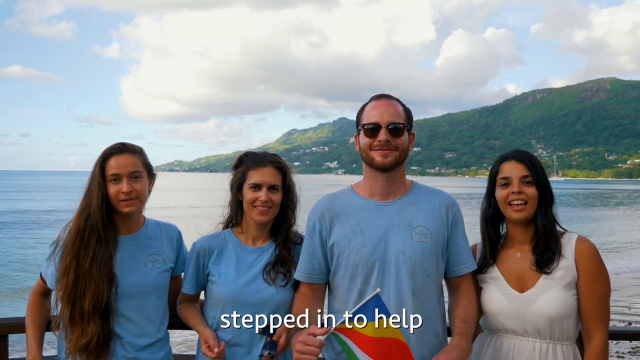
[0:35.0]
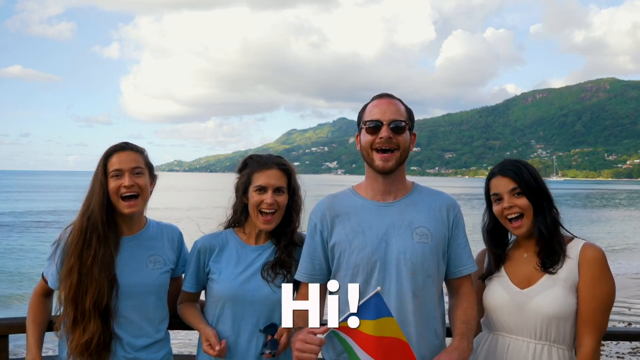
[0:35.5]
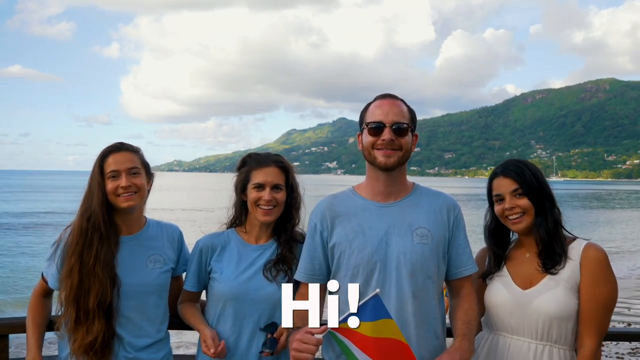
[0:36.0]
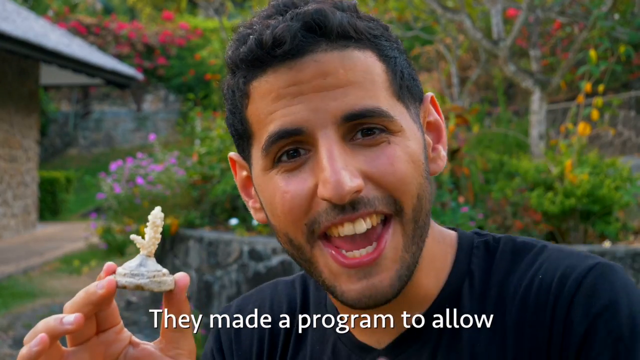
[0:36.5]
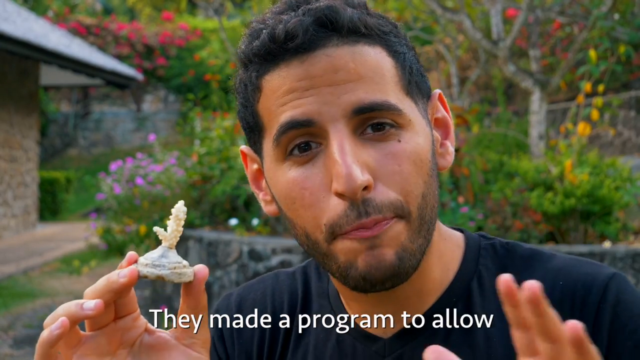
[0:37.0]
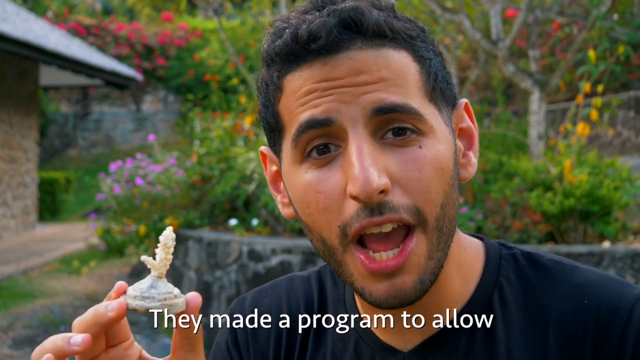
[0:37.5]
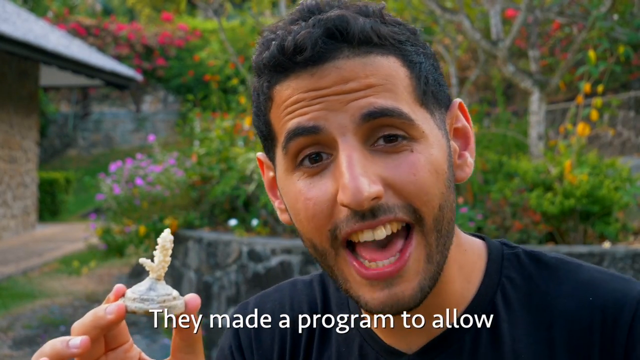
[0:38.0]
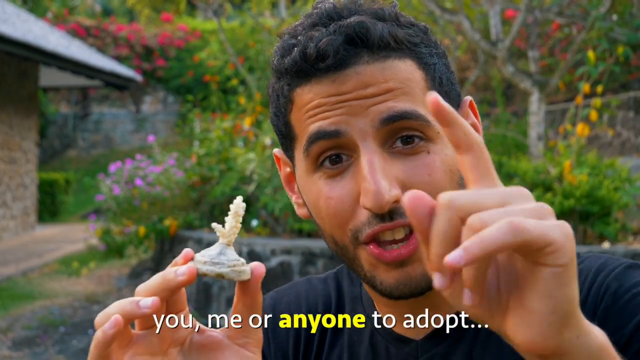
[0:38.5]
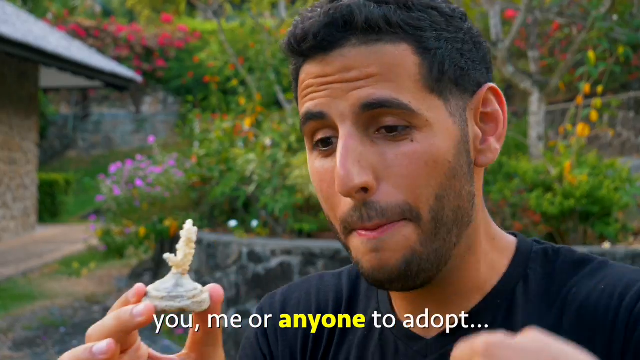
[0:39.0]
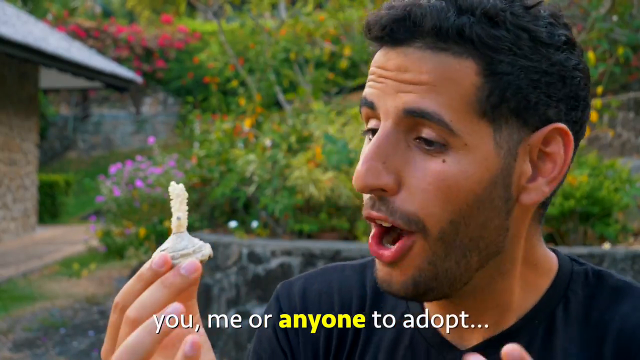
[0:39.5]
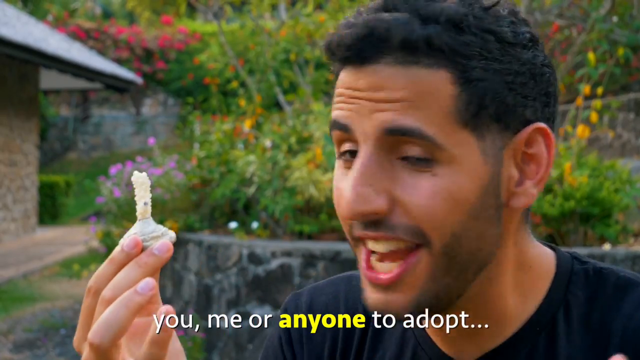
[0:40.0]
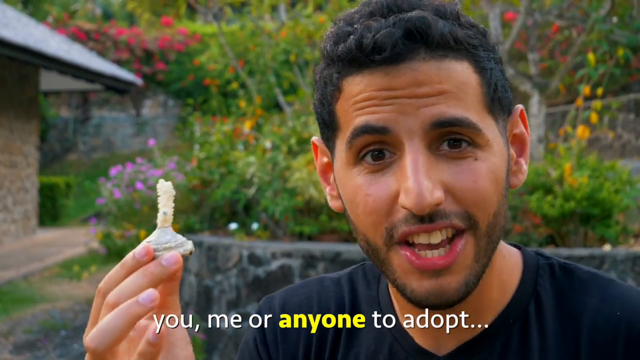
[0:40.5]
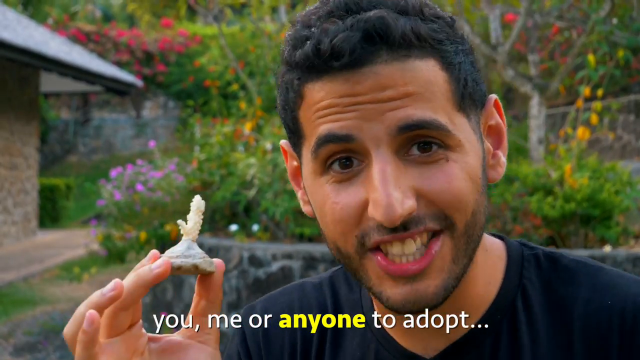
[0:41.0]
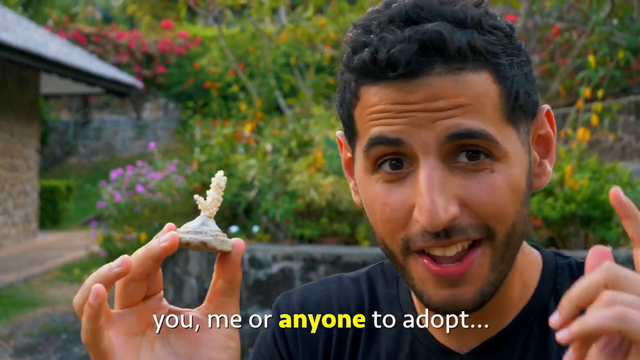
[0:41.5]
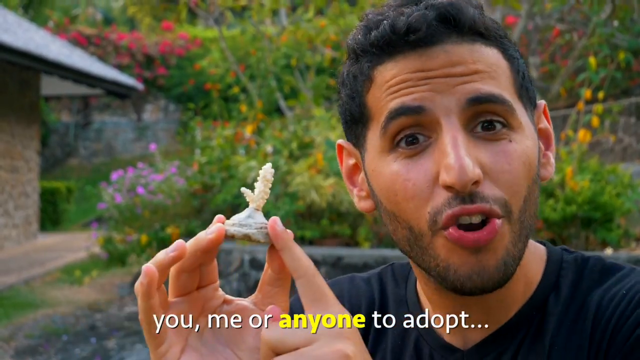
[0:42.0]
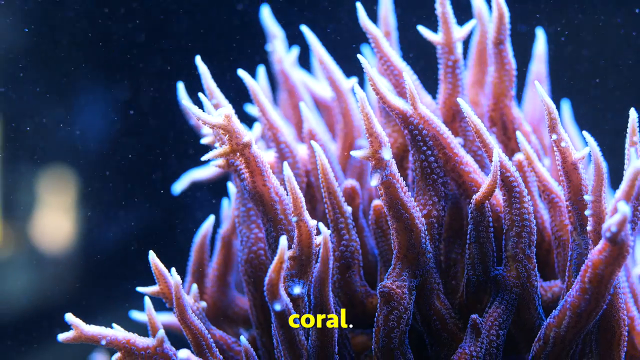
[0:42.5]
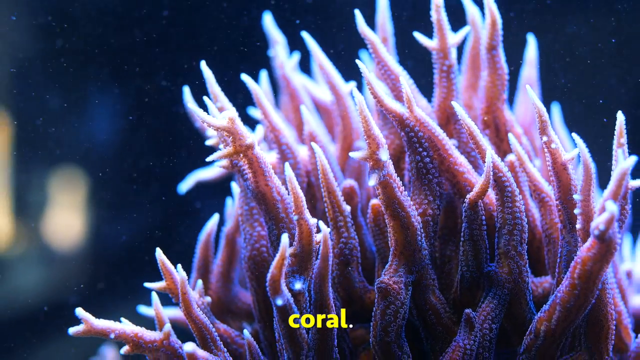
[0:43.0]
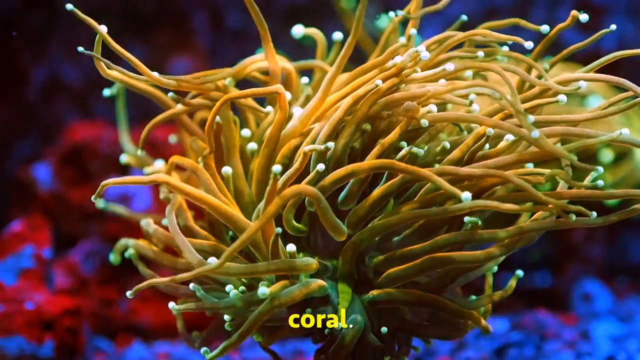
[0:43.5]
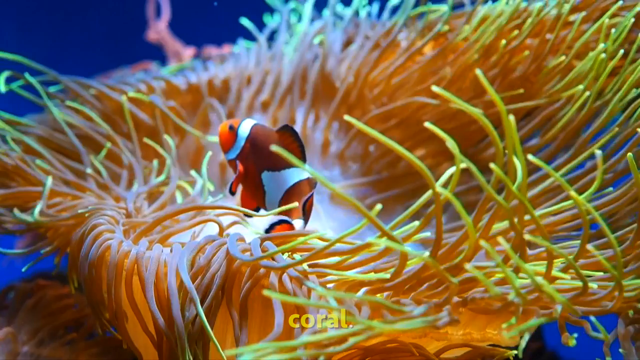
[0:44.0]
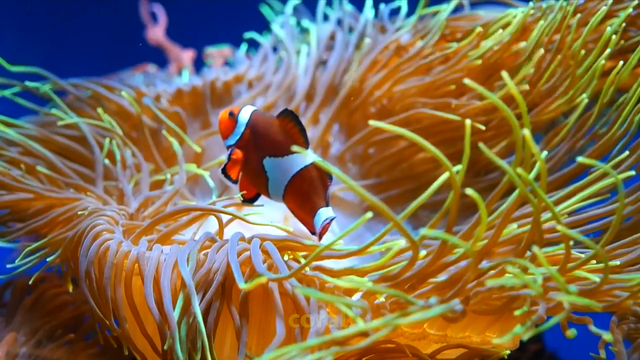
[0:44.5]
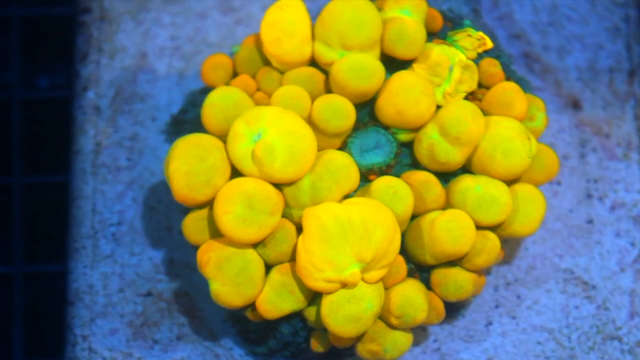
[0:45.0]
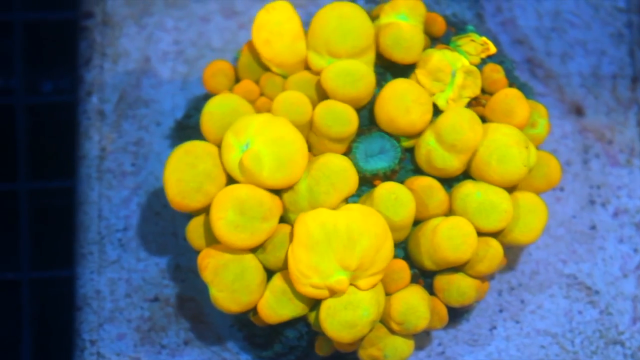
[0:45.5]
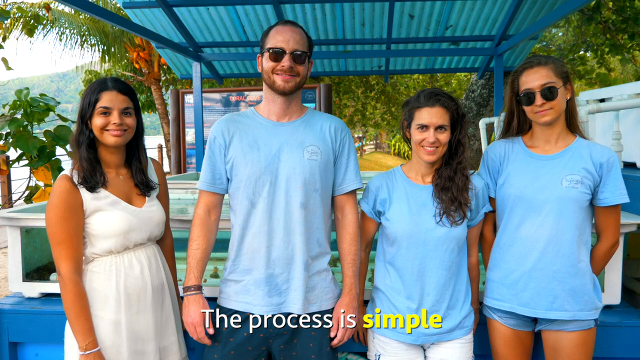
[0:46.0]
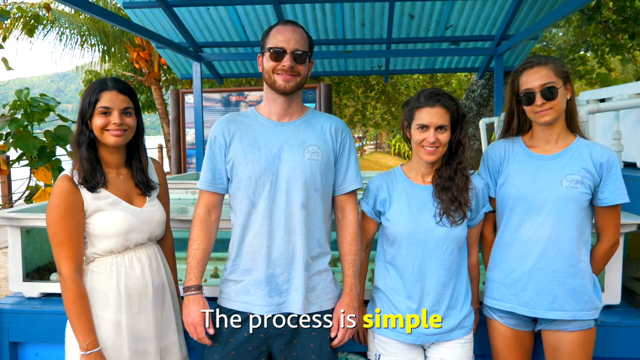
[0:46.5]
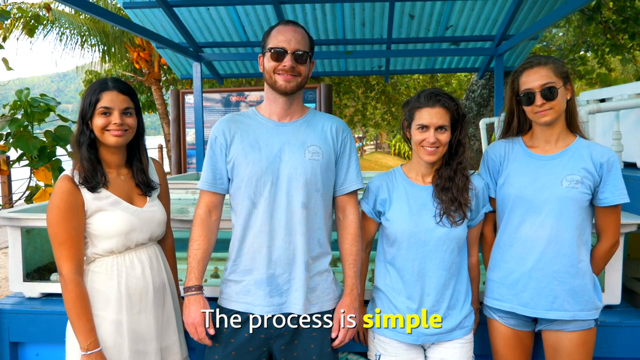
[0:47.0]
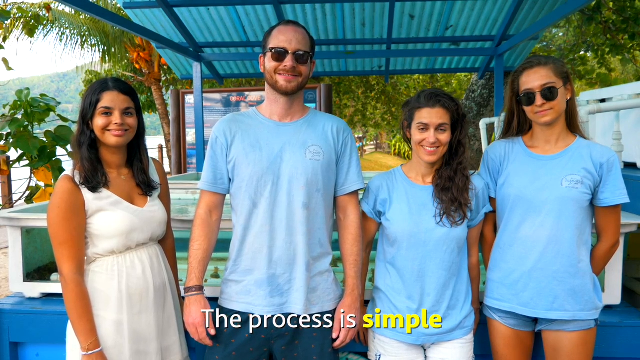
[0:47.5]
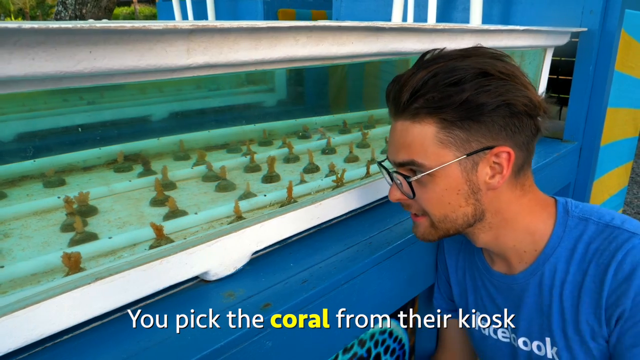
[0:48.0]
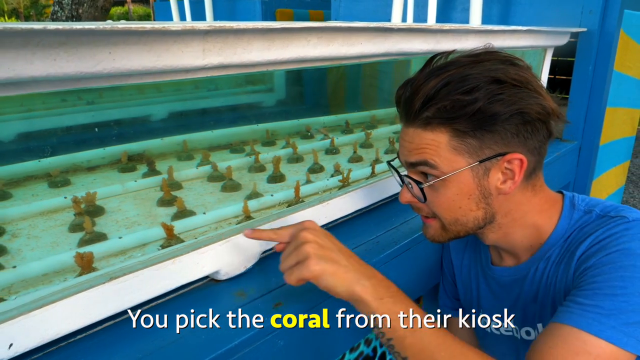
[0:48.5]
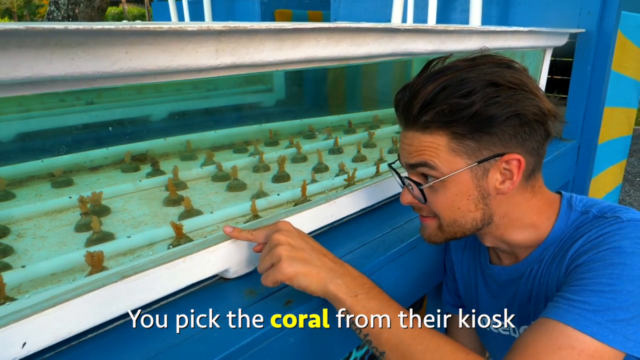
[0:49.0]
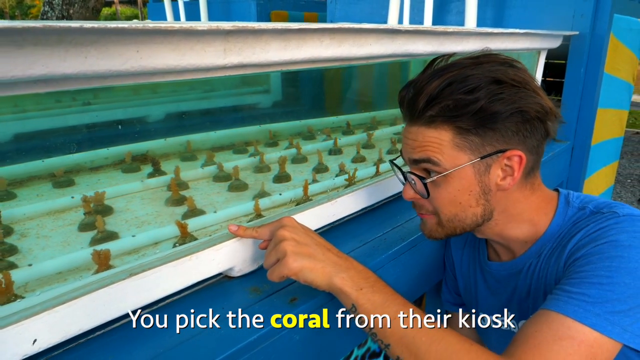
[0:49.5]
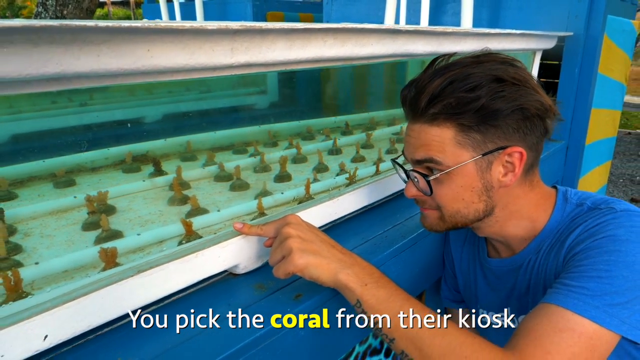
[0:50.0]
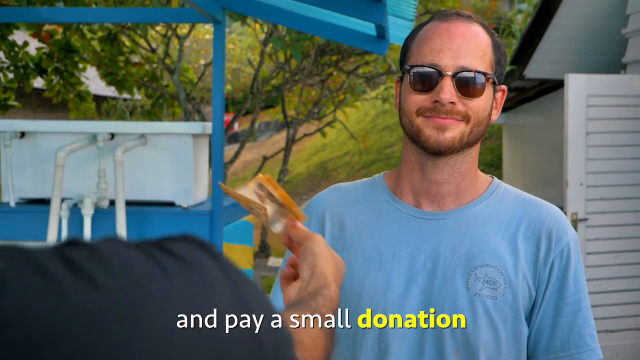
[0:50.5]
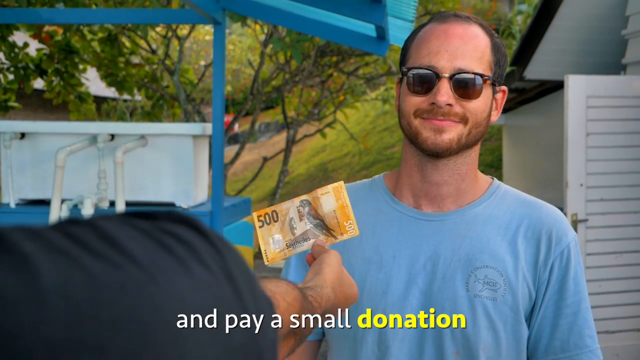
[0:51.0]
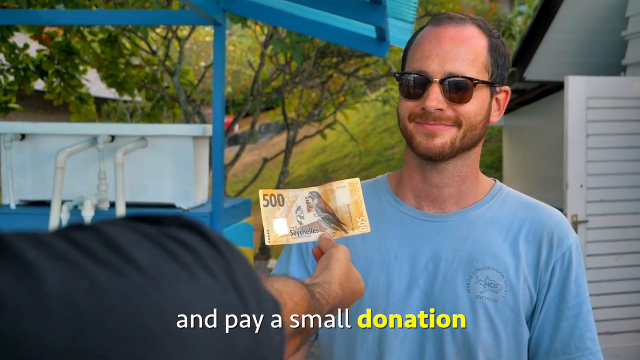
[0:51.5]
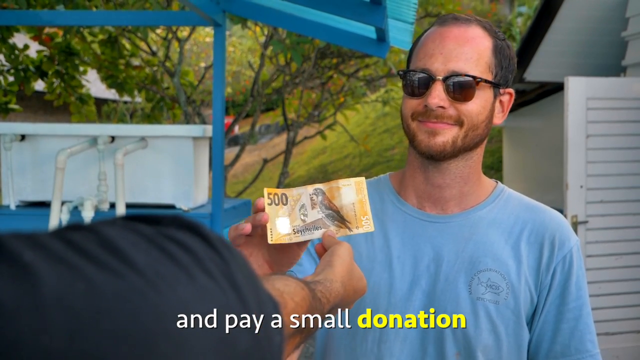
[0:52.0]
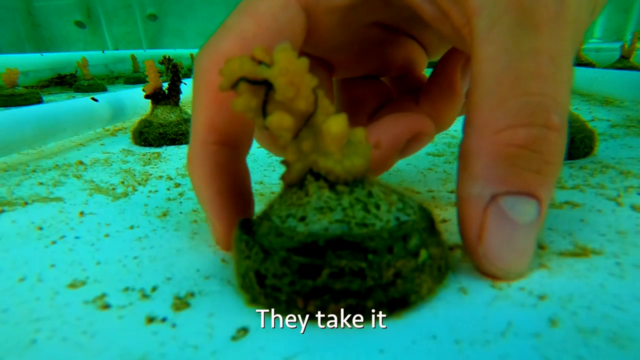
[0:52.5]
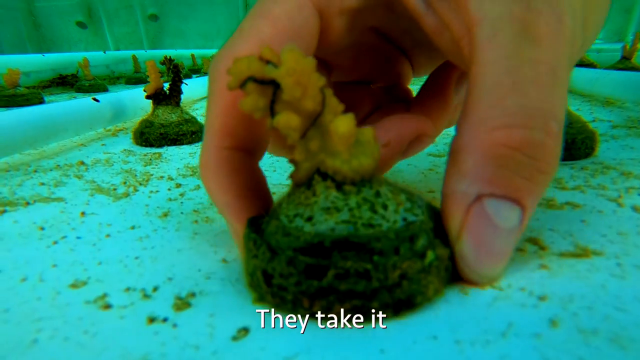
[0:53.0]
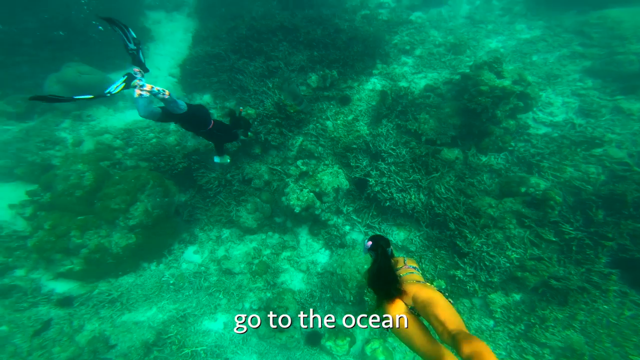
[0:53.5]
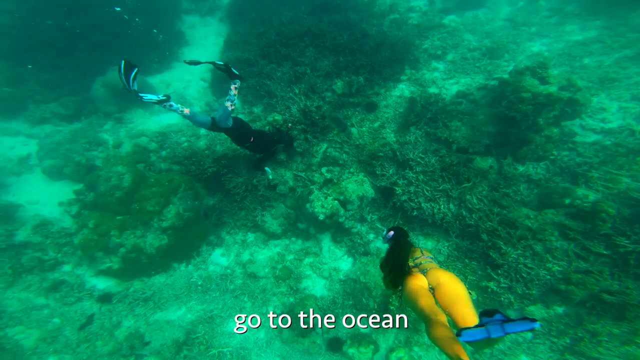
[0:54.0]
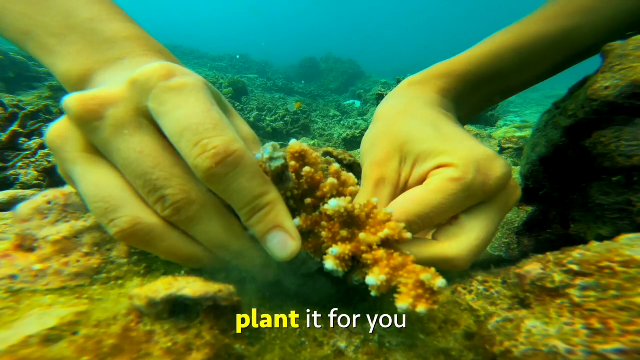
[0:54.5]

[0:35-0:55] A group shot shows the four individuals, who say hi. Text along the bottom accompanies changing images: coral, clownfish, a person pointing at a tank with baby coral, a short shot of someone handing over some money, a man holding up a coral outside of a tank, and many images of coral flourishing. The text reads: "Hi, they've made a program to allow you and me or anyone to adopt coral. The process is simple. You pick a coral from their kiosk and pay a small donation. They take it, go to the ocean, and they plant it for you."